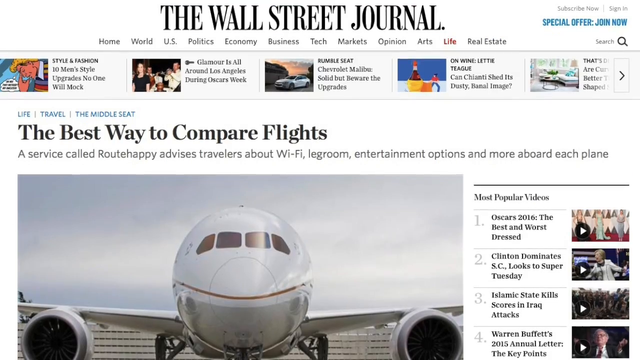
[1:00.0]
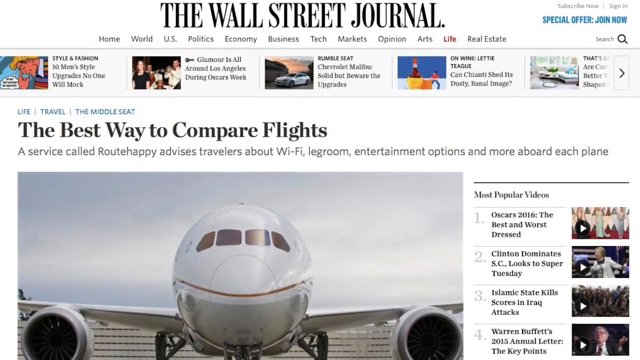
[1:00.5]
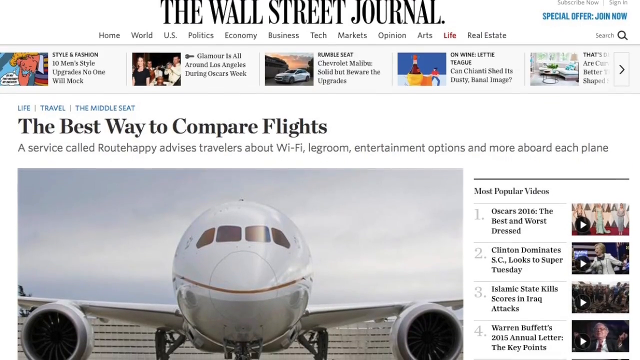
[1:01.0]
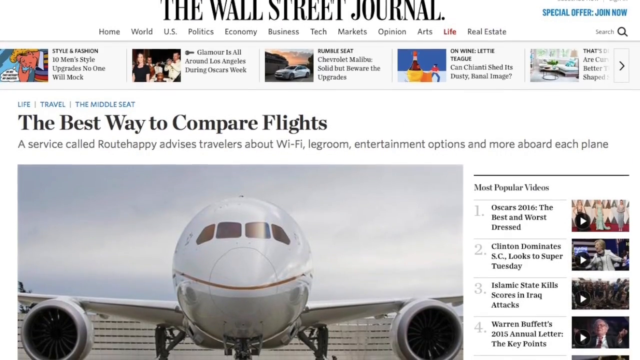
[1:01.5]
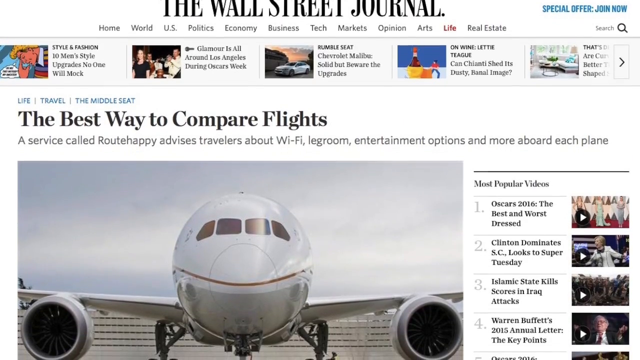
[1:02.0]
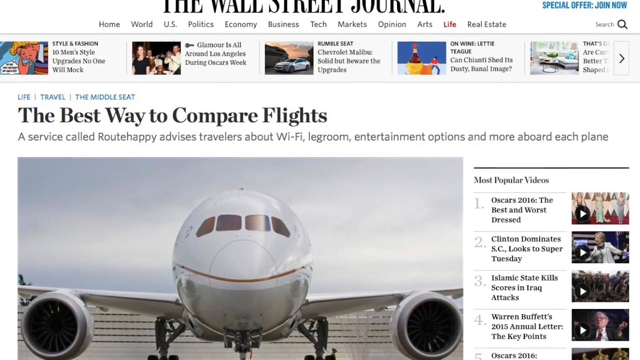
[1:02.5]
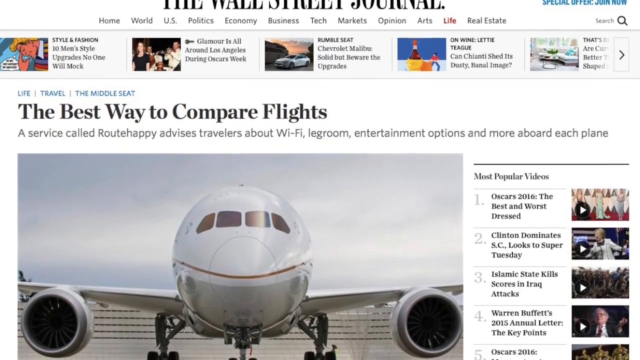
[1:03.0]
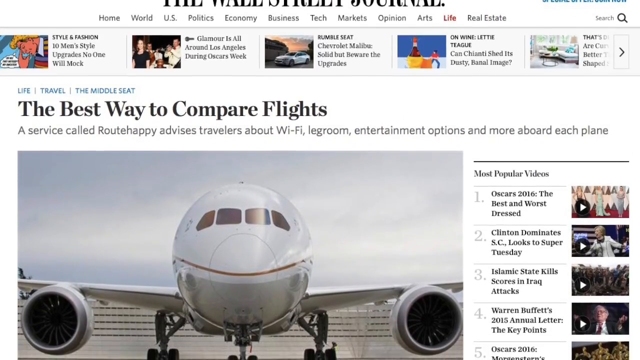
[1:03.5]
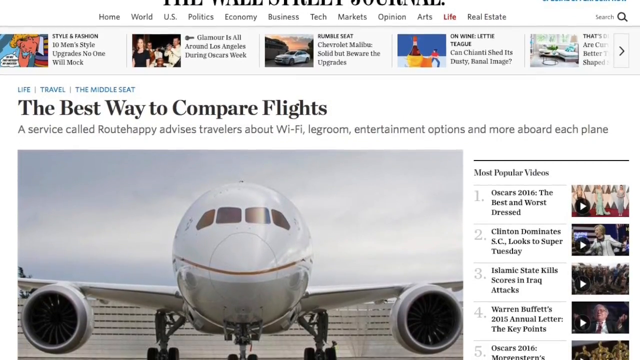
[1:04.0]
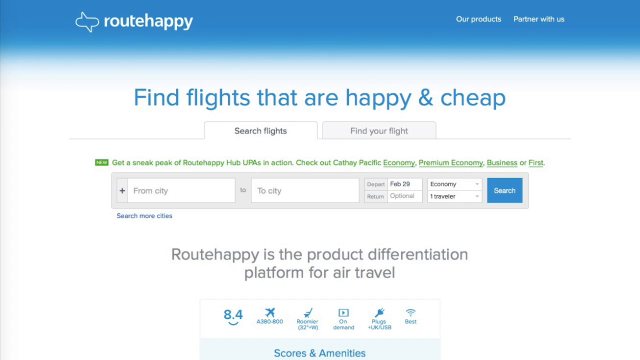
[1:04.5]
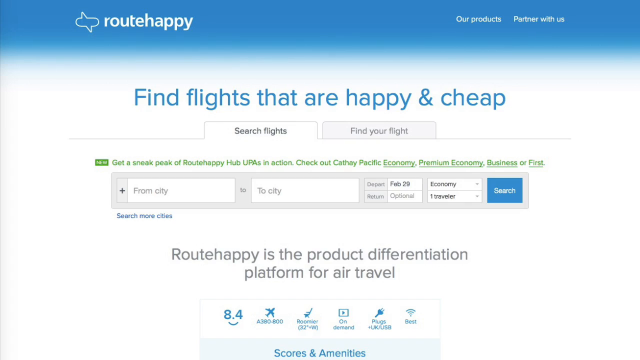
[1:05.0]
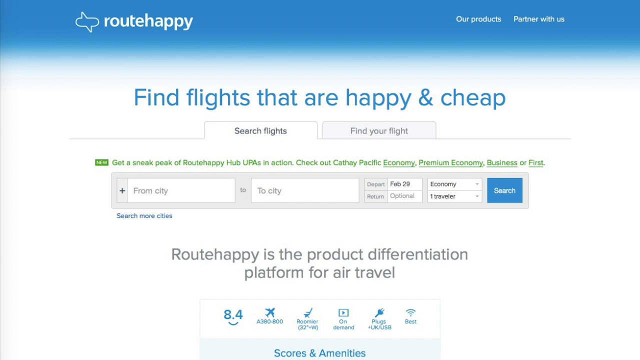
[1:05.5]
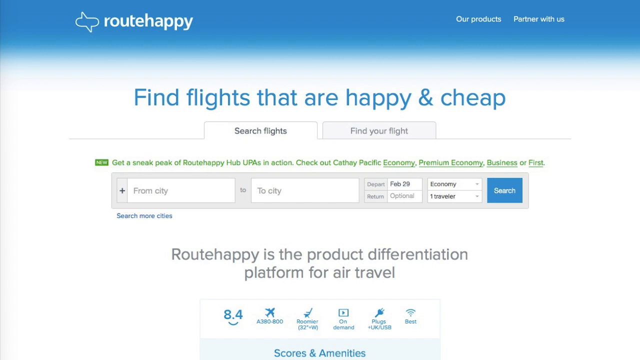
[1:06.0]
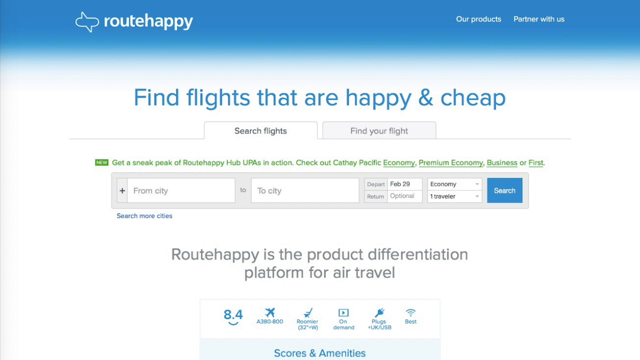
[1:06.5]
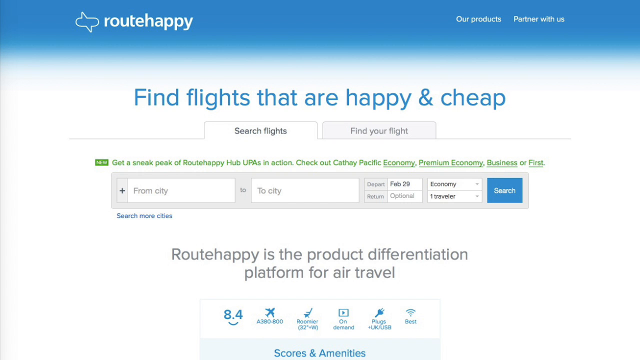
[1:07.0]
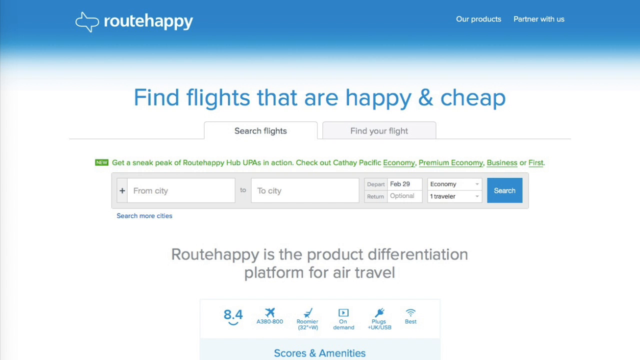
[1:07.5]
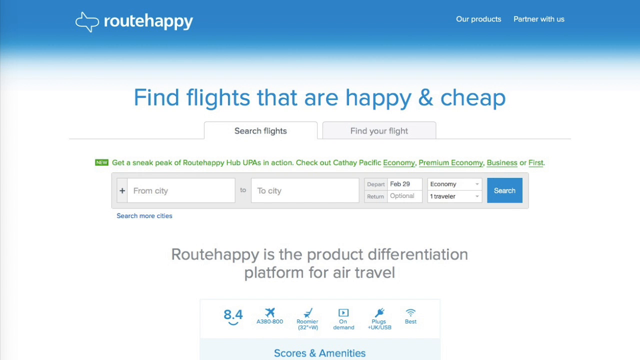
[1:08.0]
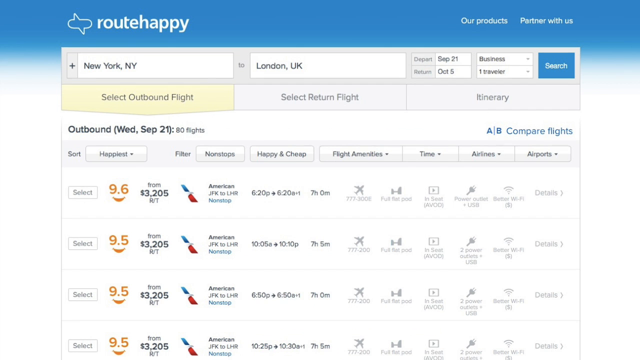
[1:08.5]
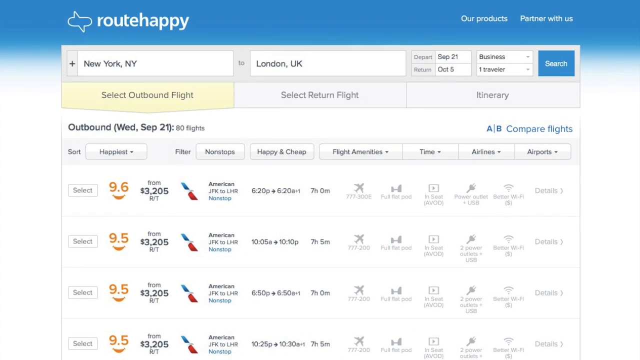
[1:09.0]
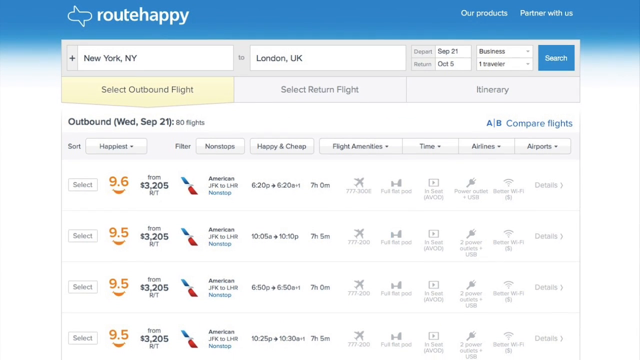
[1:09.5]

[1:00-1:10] The Wall Street Journal website is shown, and the camera scrolls down very slowly, viewing the picture of an airplane under the title. The video then moves to another website called Route Happy, which indicates that flights that are happy and cheap can be found, with a section underneath for entering information to find flights. On the next screen, the user has entered New York to London, and all the different available flights are listed. The camera slowly scrolls down the website.